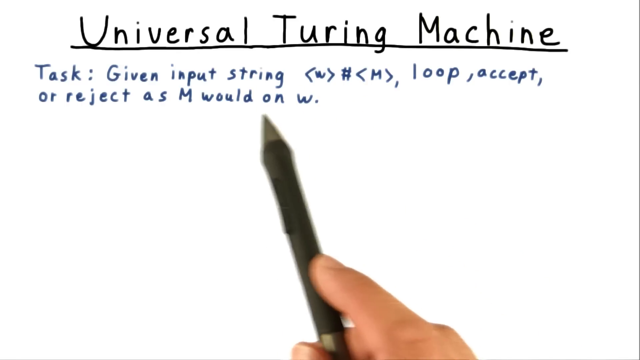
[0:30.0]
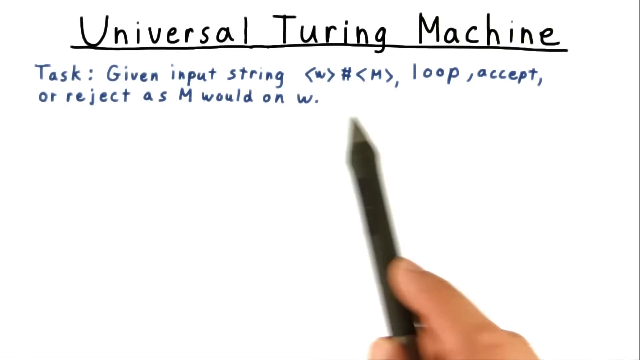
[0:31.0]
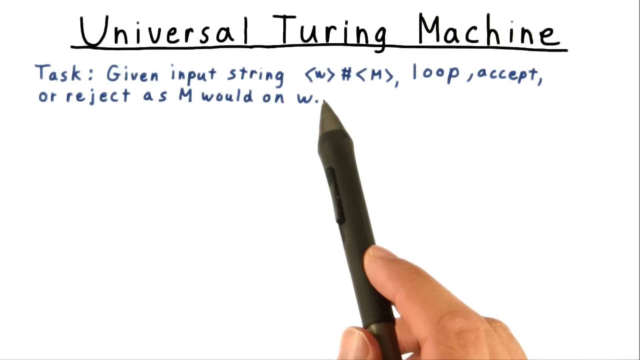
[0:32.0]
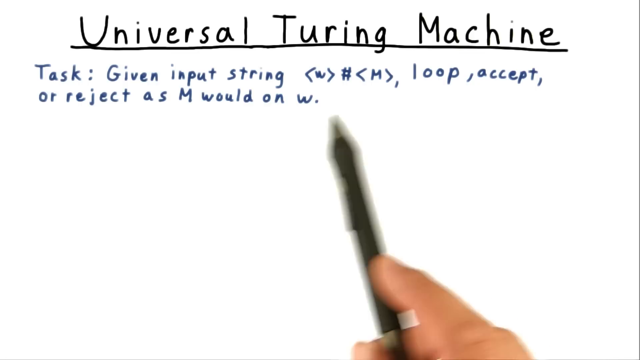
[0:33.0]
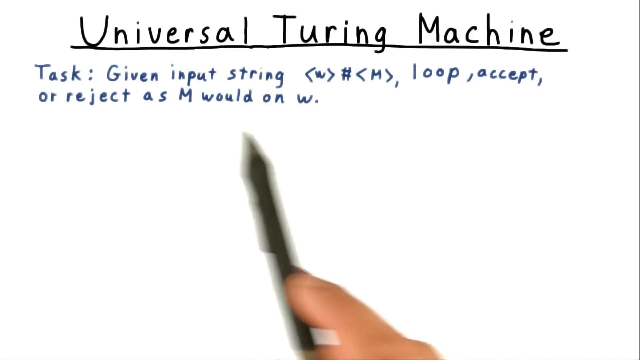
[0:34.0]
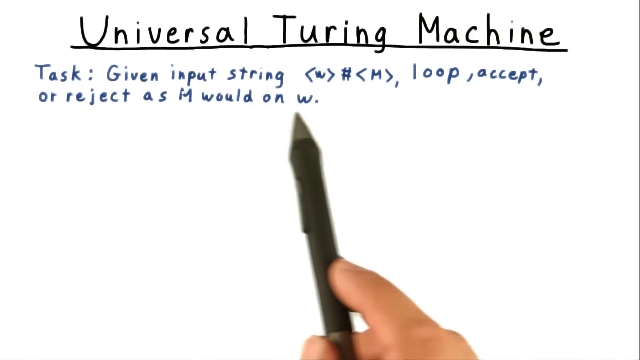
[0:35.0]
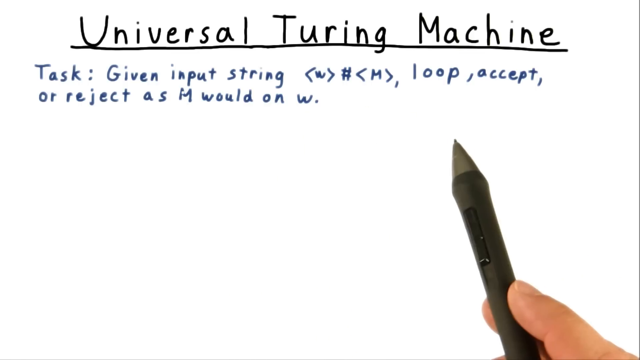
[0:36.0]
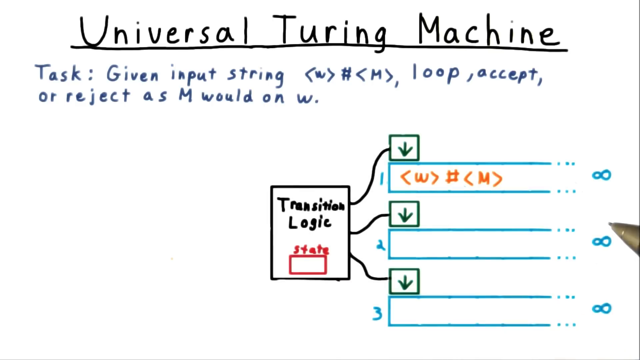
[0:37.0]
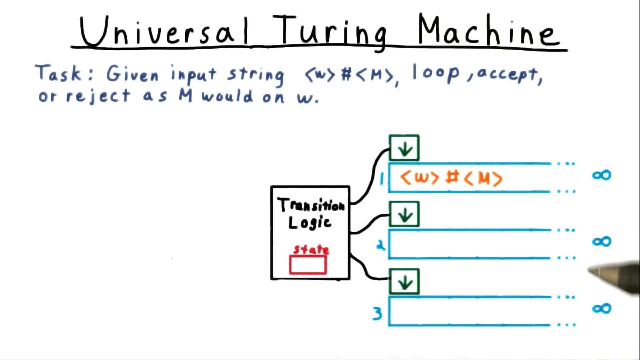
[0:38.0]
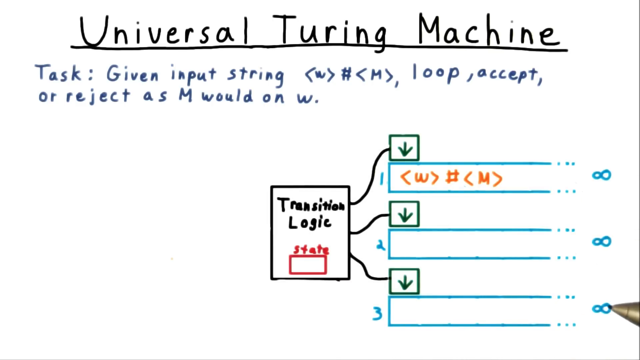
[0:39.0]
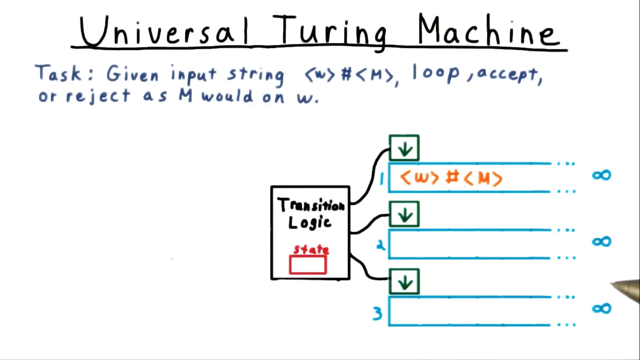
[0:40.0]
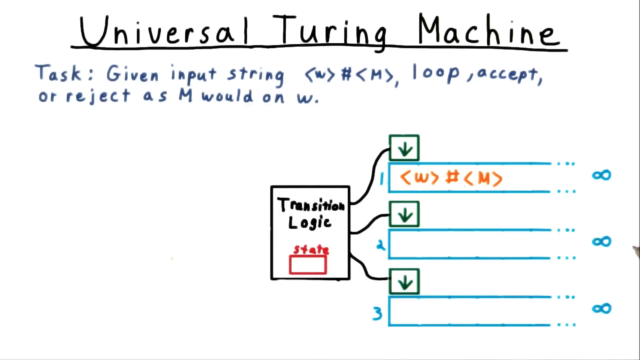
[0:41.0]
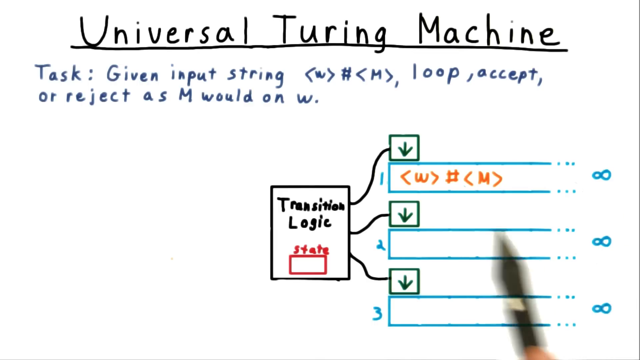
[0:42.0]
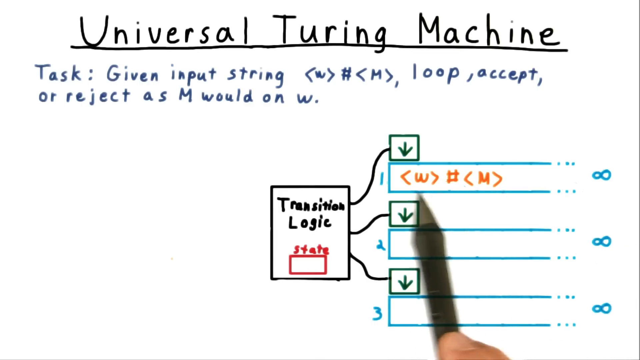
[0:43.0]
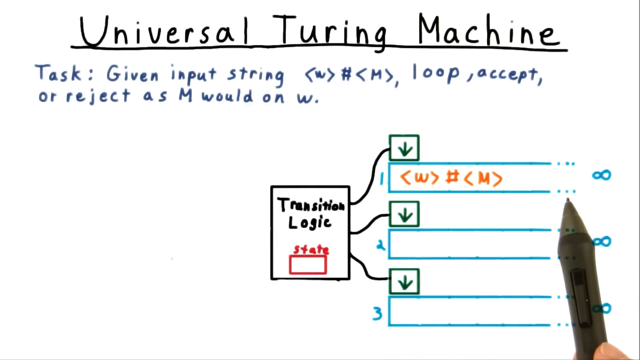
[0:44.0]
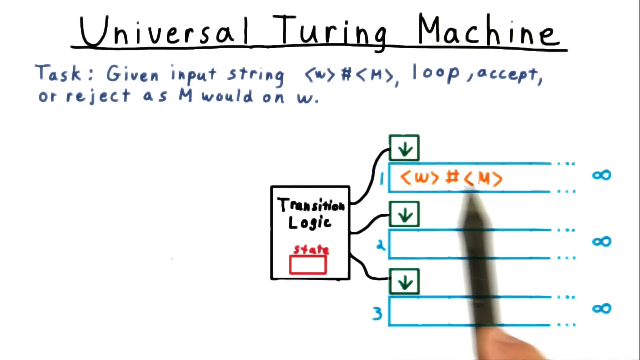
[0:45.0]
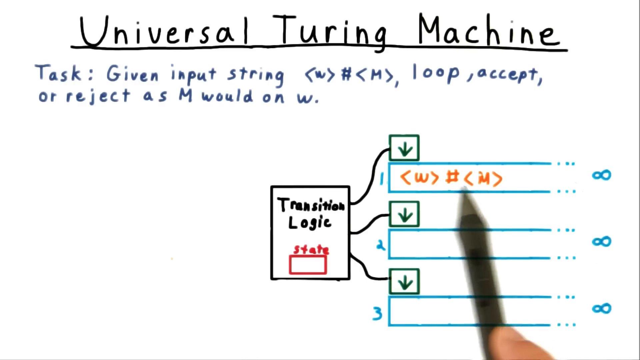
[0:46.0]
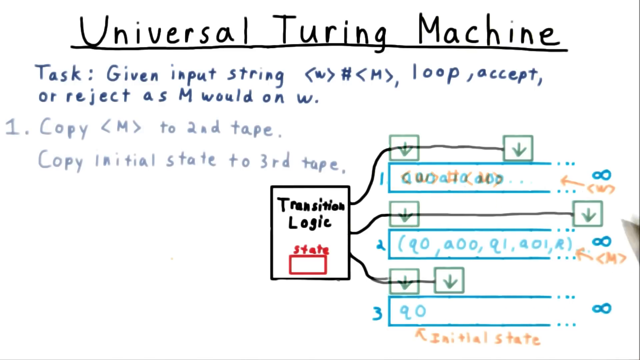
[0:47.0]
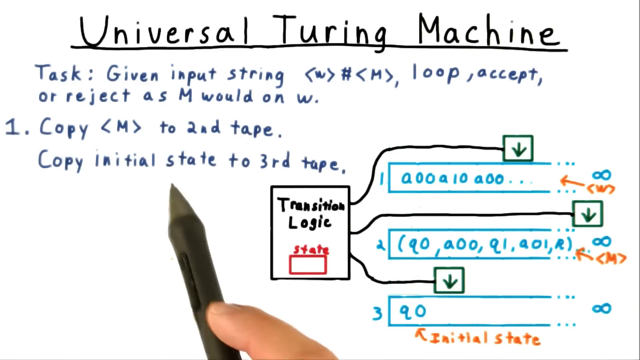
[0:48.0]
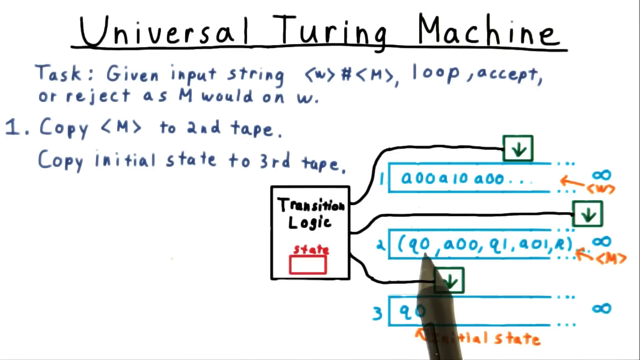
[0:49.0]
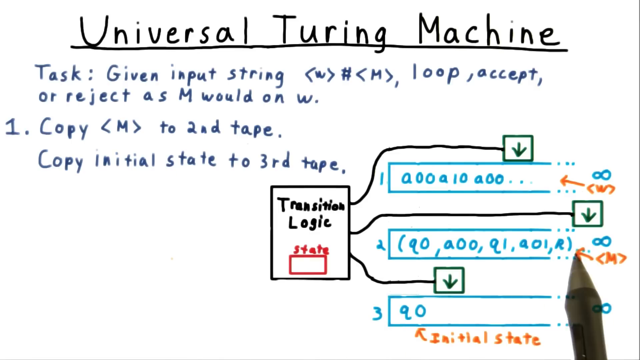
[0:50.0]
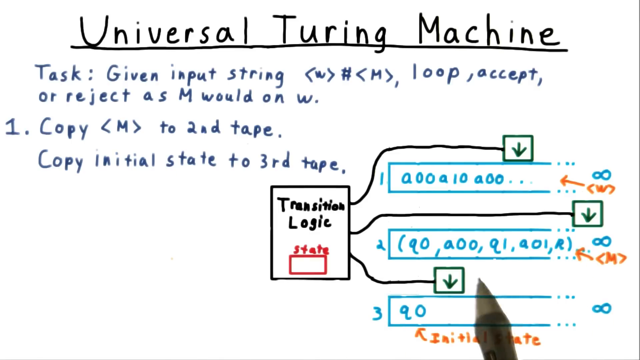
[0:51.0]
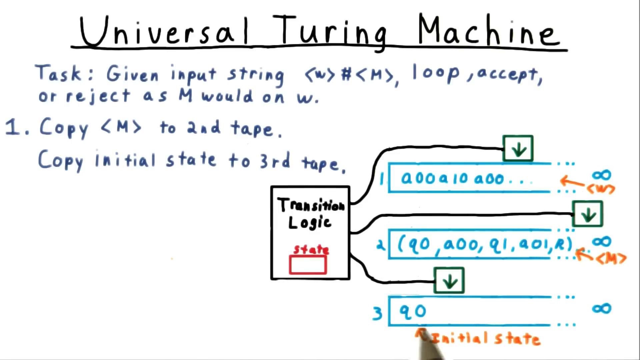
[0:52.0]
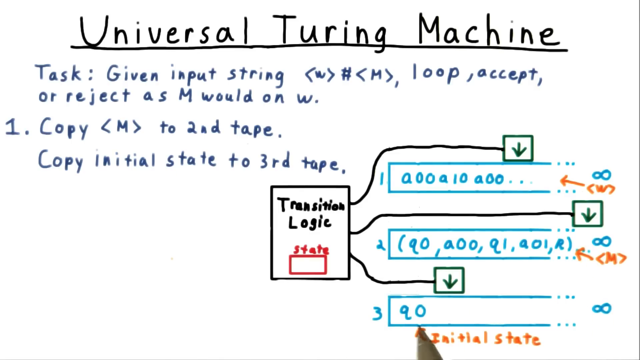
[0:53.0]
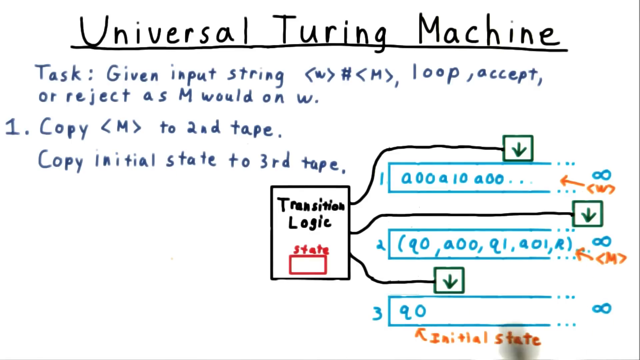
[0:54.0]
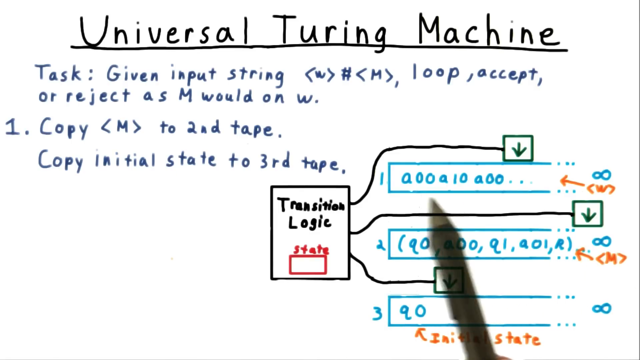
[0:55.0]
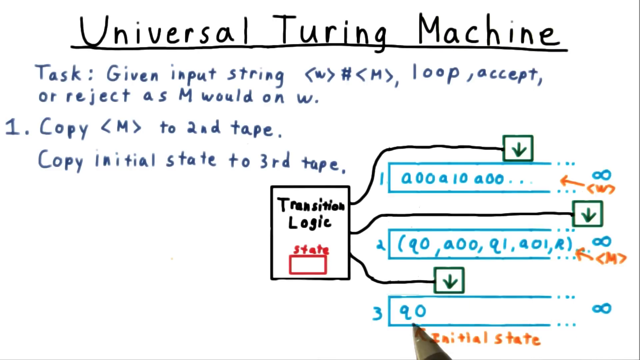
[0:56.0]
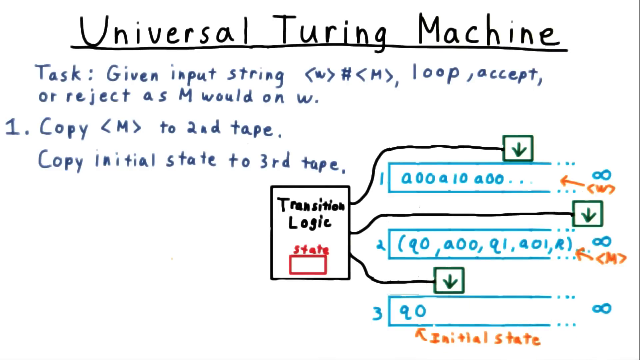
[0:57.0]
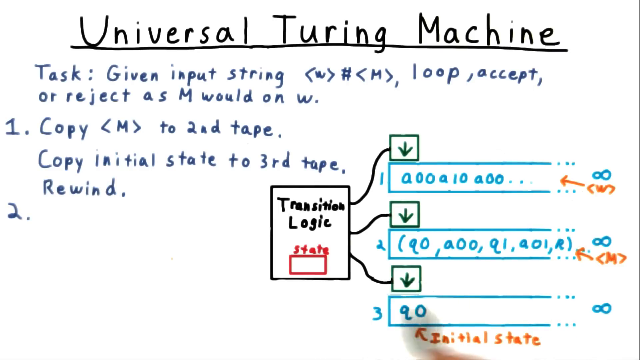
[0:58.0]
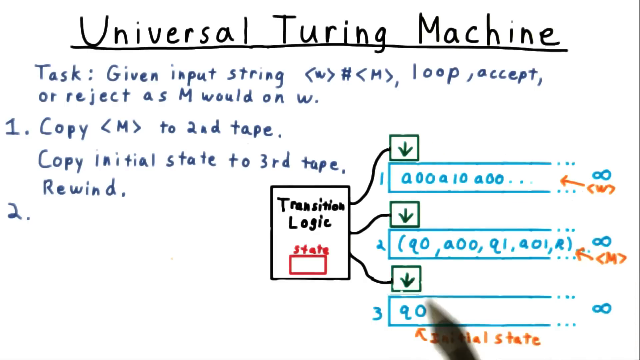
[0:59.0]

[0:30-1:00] On the whiteboard, digital text is being interacted with by a stylus pen. The pen points at the small description text below the title, hovering underneath it without touching it, moving beneath the text to highlight it. A new diagram then sort of fades into view on the right section of the whiteboard. The diagram shows a flow that begins with a box that says "transition logic" and the word "state," which feeds off into three different sections. The top section has a box with "<w>#<m>" written inside it, and the stylus hovers over this section. More text then appears underneath the original description: "1.copy <m> to 2nd tape, copy initial state to 3rd tape." More information has also been added to the diagram, which looks like numbers.